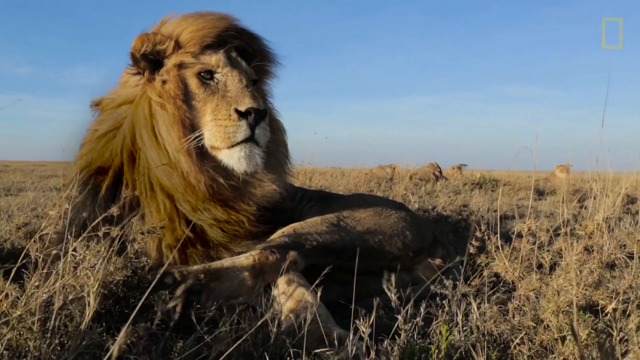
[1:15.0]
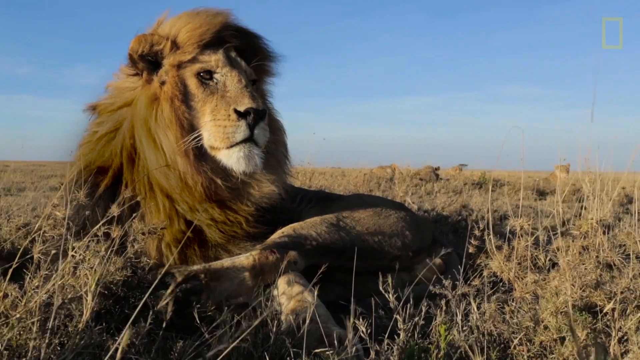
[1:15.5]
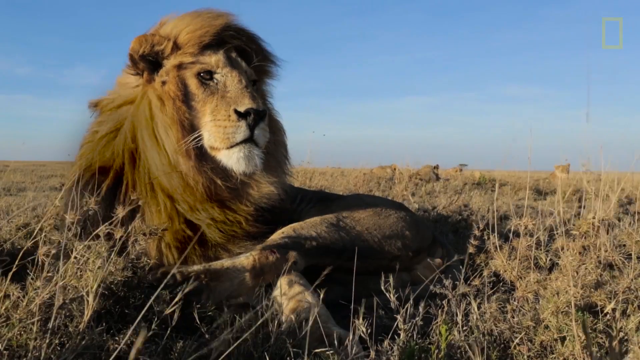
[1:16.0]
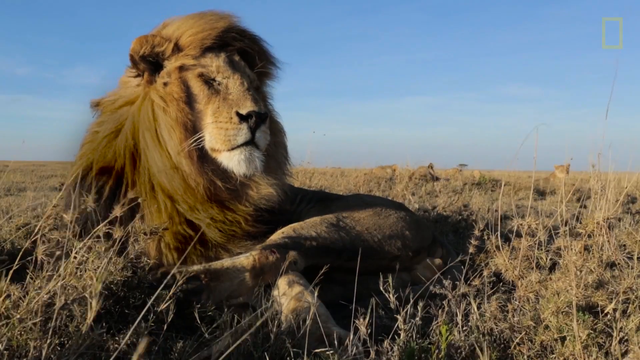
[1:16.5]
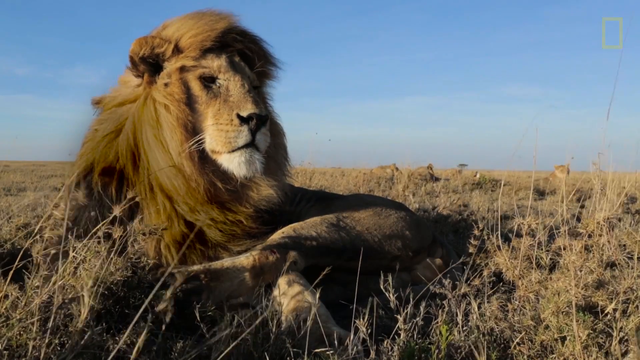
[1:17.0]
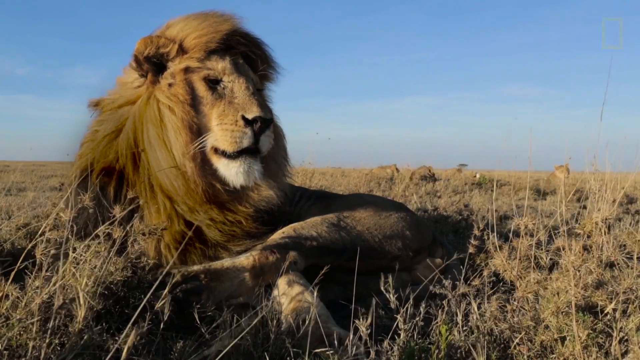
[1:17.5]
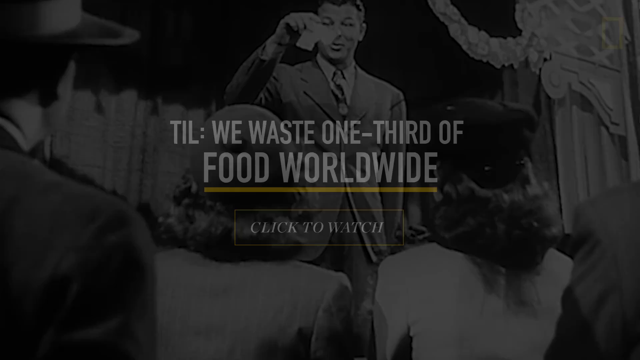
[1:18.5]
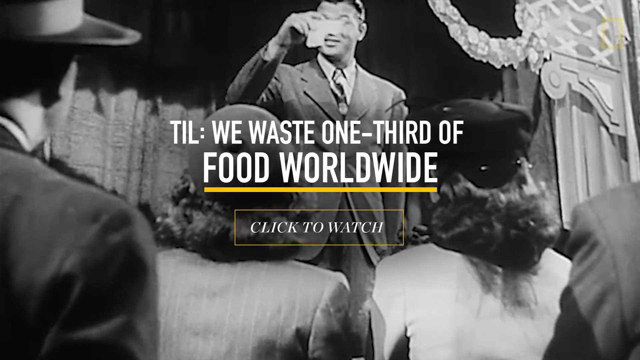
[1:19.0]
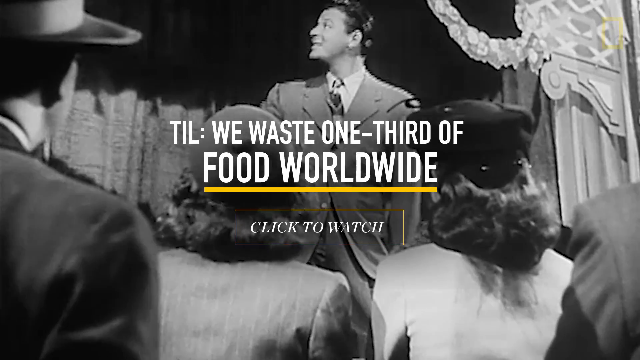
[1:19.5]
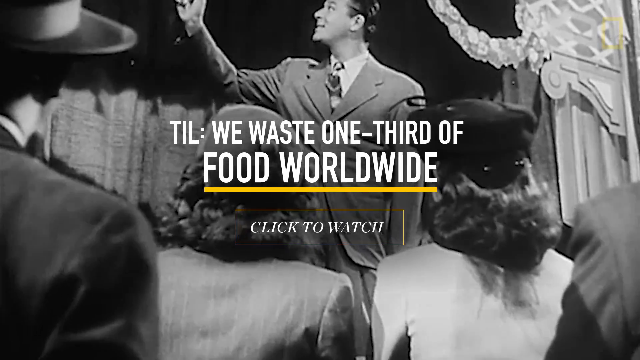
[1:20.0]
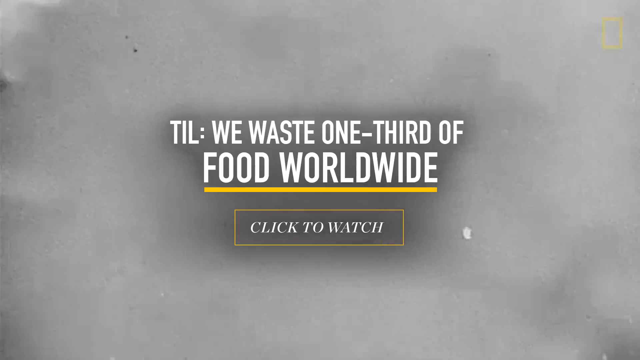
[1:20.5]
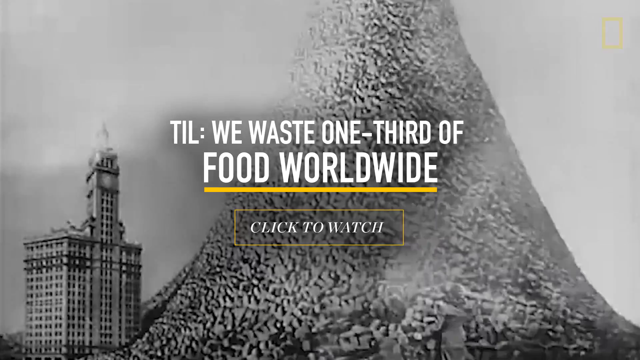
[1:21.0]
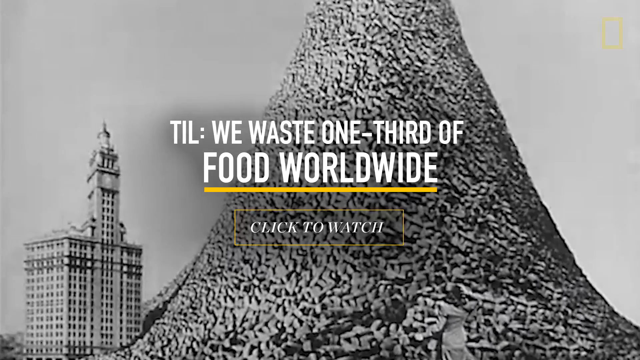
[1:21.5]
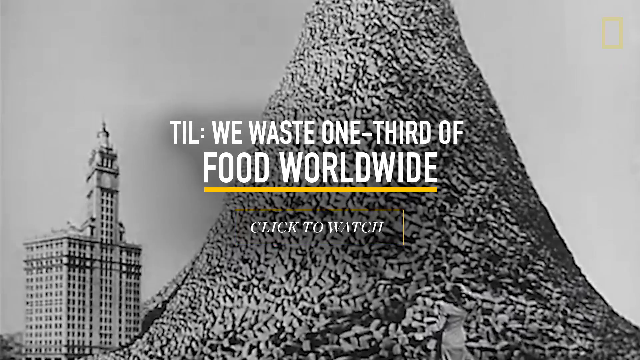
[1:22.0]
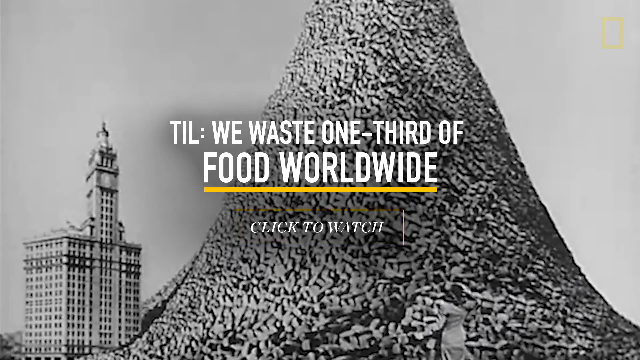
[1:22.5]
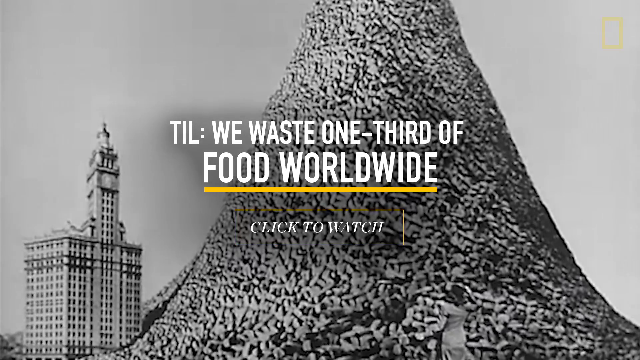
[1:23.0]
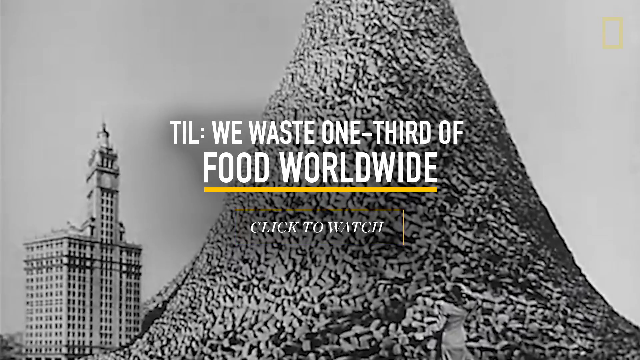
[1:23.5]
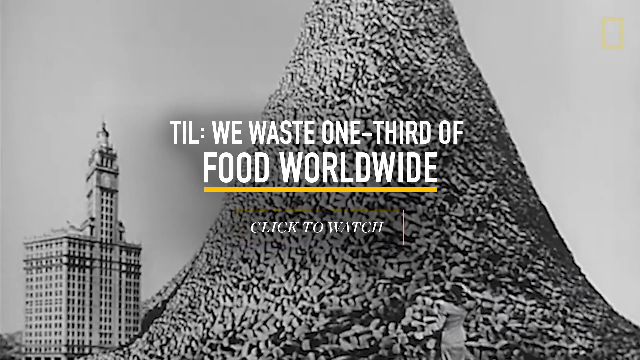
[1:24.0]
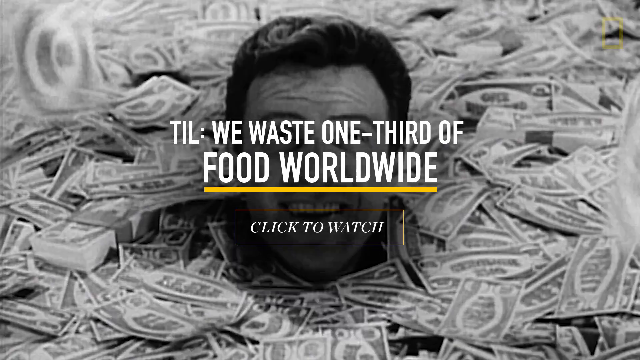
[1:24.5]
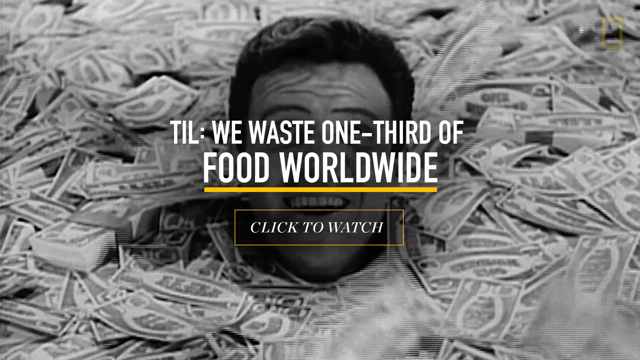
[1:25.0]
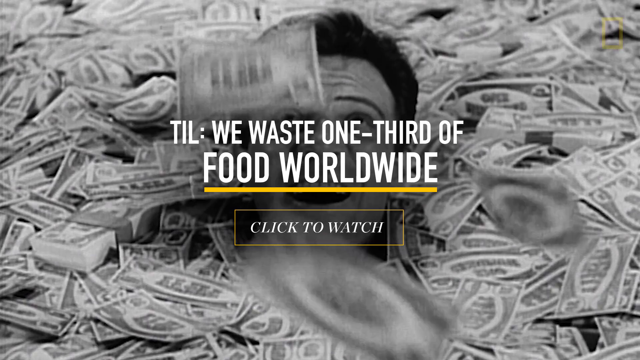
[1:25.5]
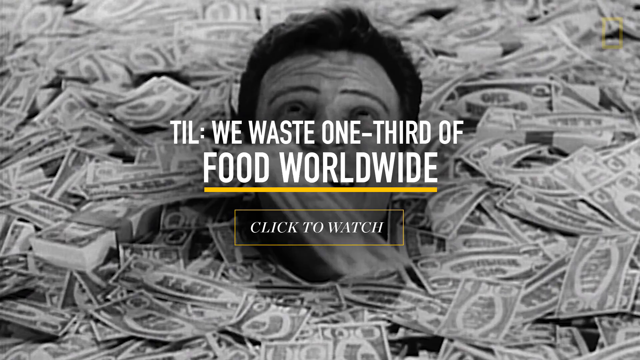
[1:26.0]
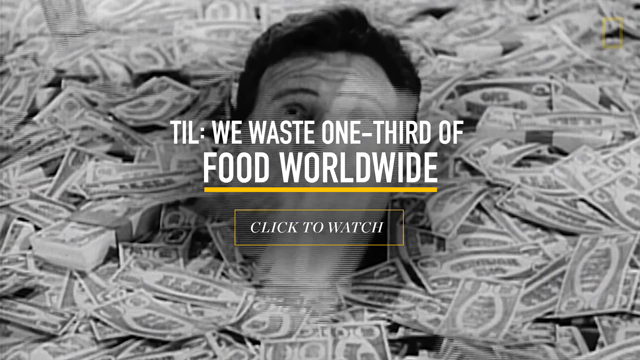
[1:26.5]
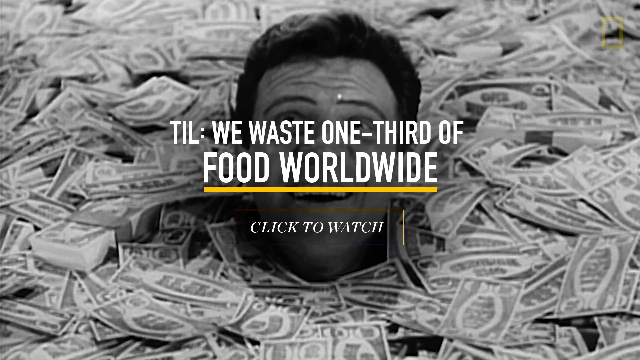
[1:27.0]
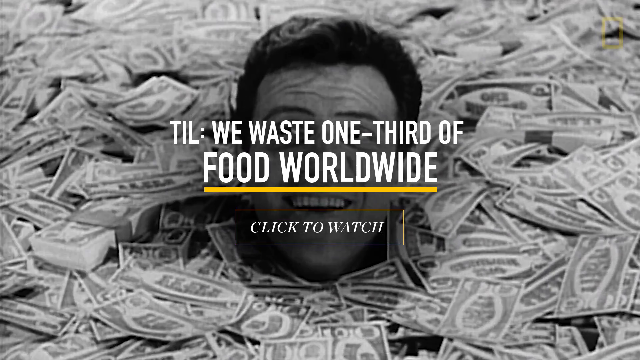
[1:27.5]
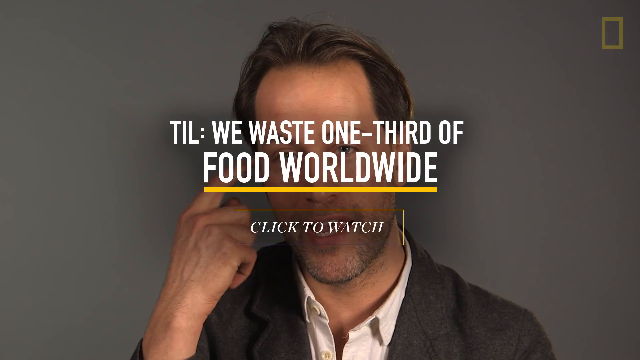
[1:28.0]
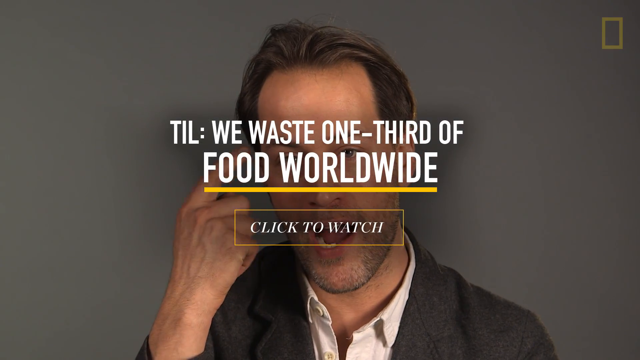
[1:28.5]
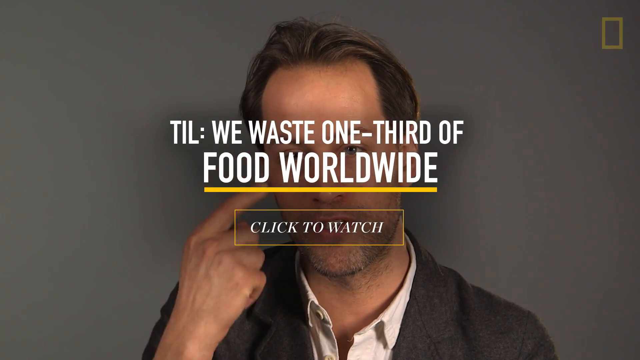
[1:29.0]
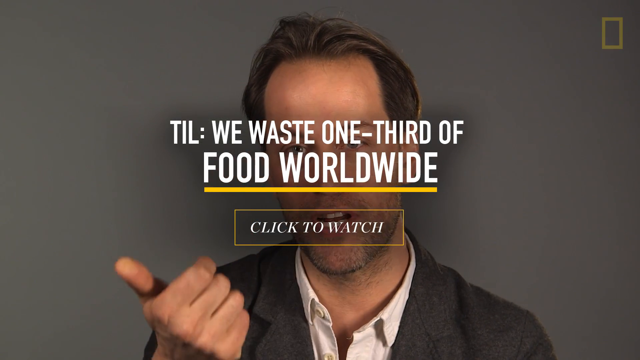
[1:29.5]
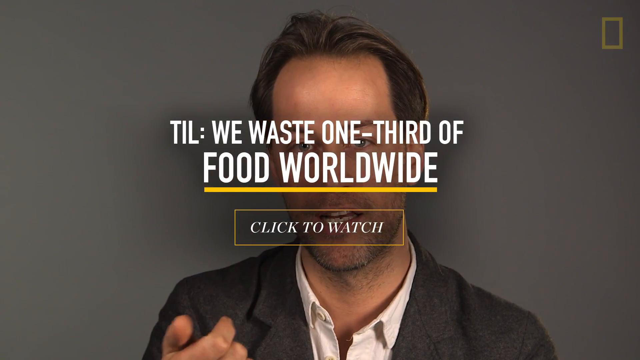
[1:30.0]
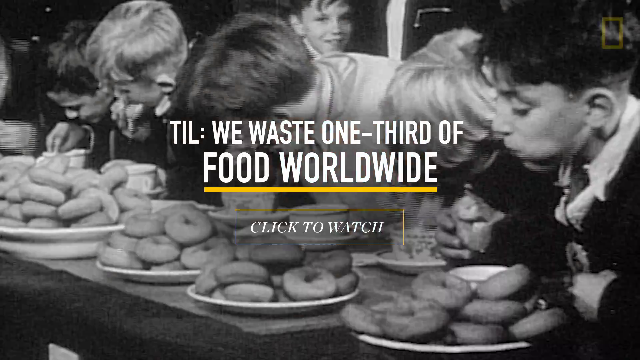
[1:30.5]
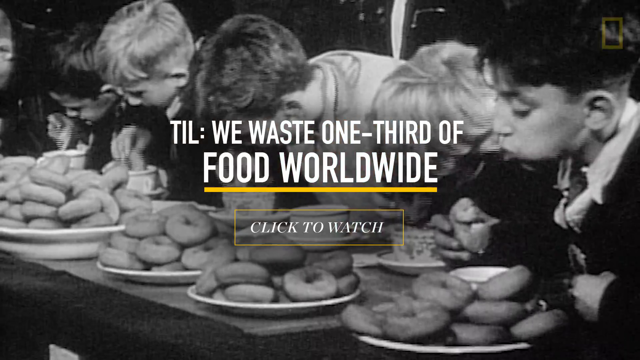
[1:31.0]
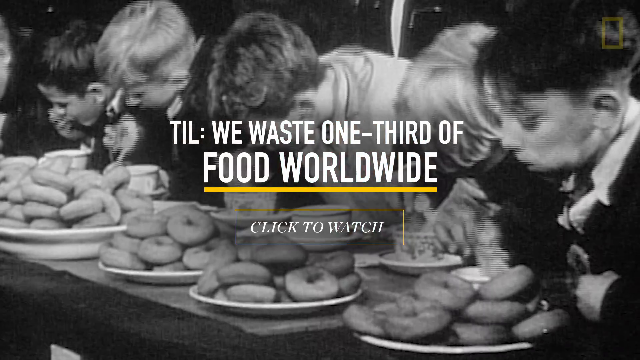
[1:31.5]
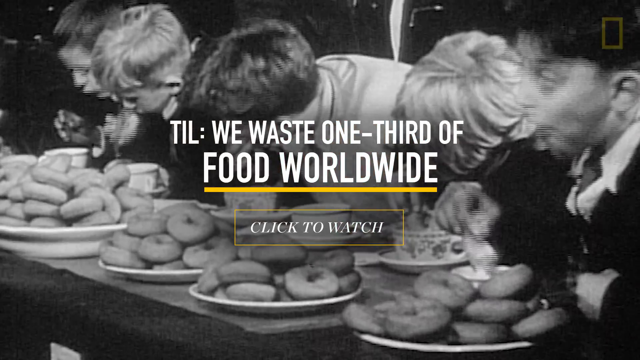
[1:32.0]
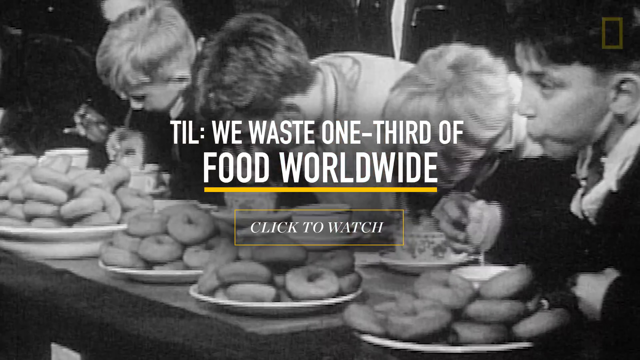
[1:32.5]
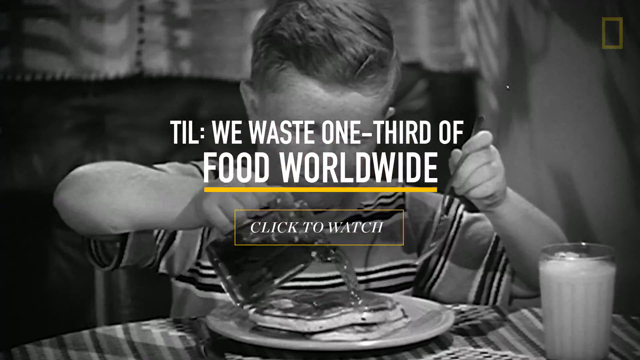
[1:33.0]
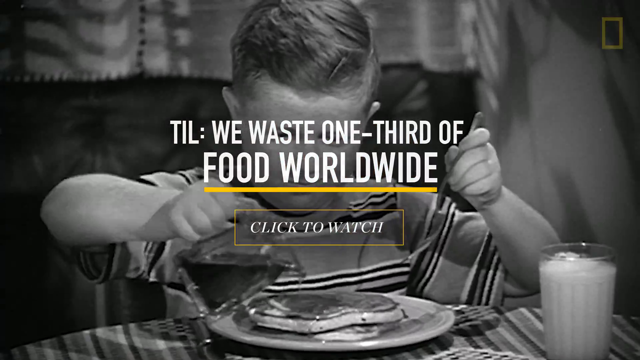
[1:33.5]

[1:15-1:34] A male lion lays down in the savannah with his head up, scanning the horizon and looking alert yet relaxed. He has white on his chin as kind of a distinguishing feature. In front of him is some kind of prey he has caught, clearly no longer alive, its head tilted back. The grass around him has a dried-out, yellowish, kind of burnt feel, not from fire. The sky behind him is clear blue with some layers of white. The wind blows both the grass in front of him and his hair.